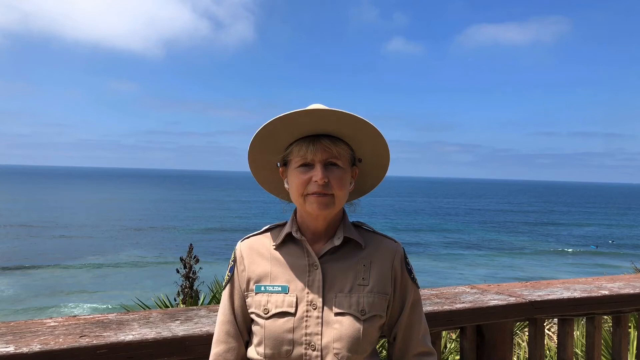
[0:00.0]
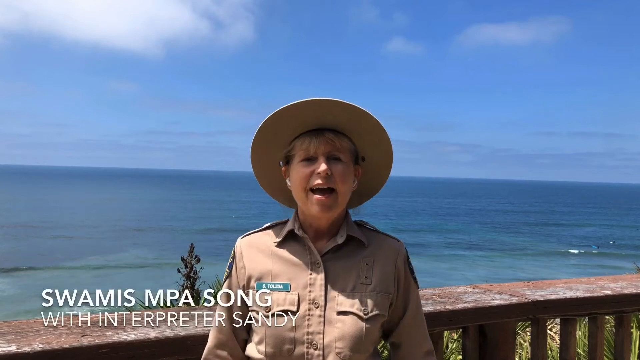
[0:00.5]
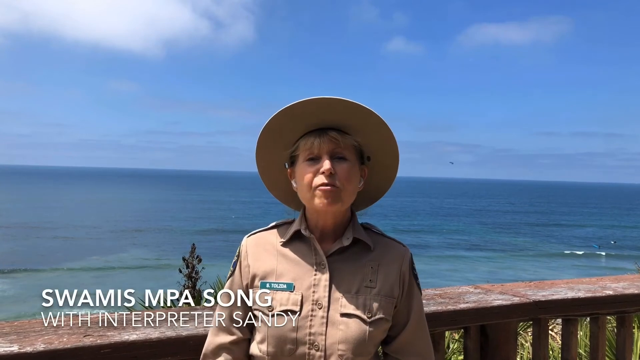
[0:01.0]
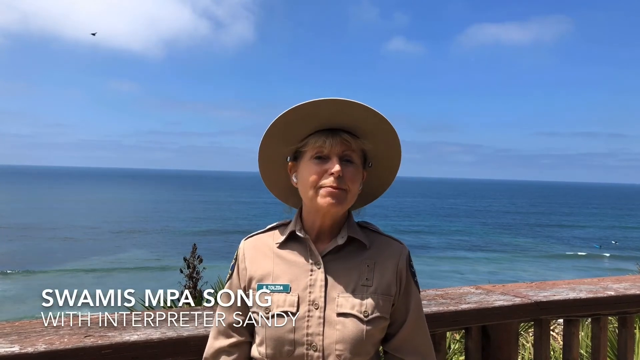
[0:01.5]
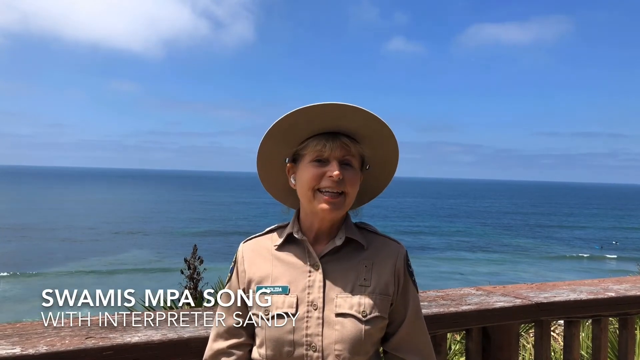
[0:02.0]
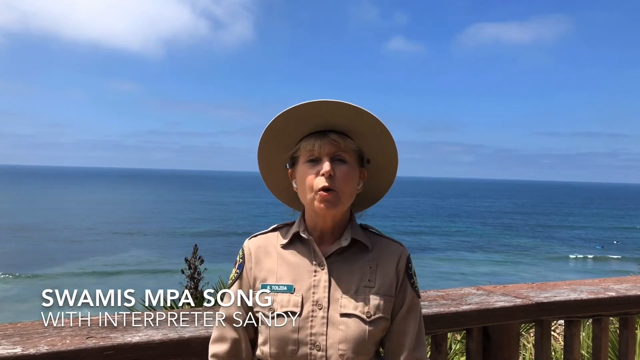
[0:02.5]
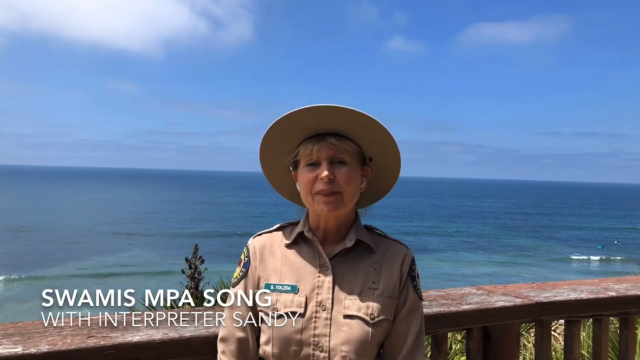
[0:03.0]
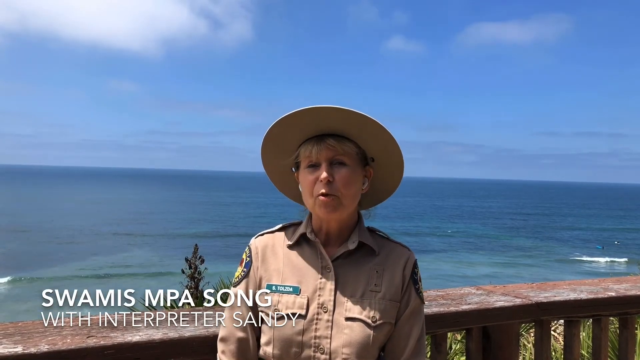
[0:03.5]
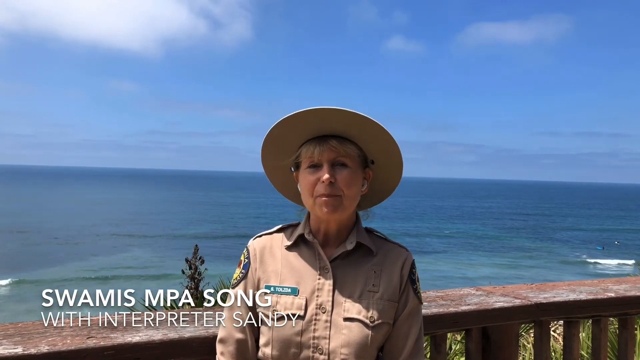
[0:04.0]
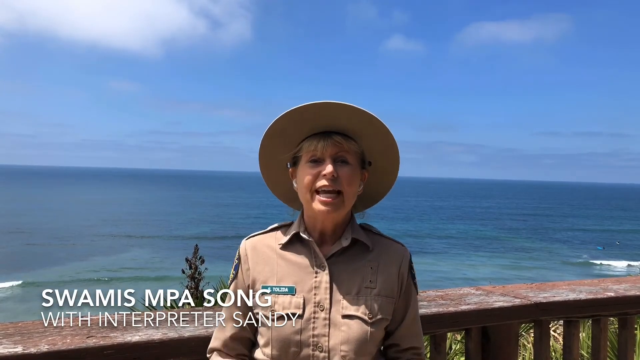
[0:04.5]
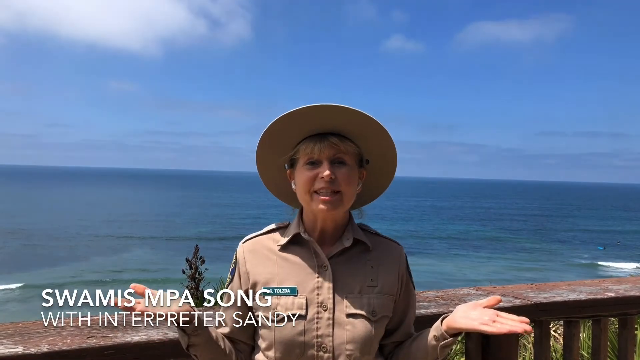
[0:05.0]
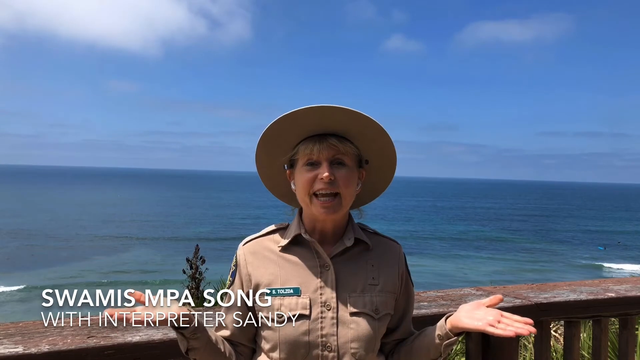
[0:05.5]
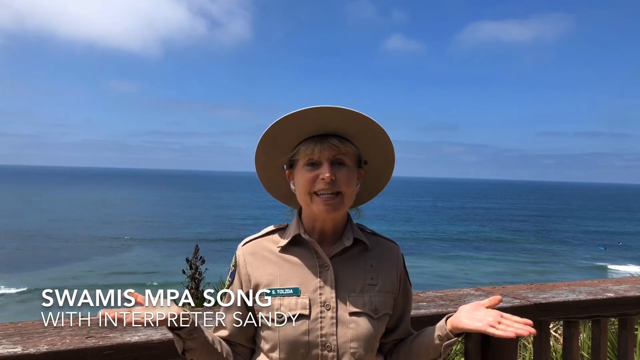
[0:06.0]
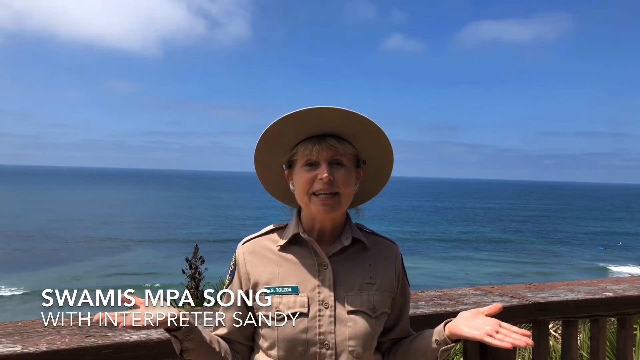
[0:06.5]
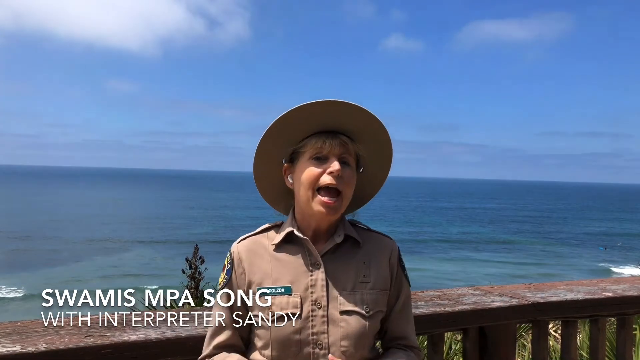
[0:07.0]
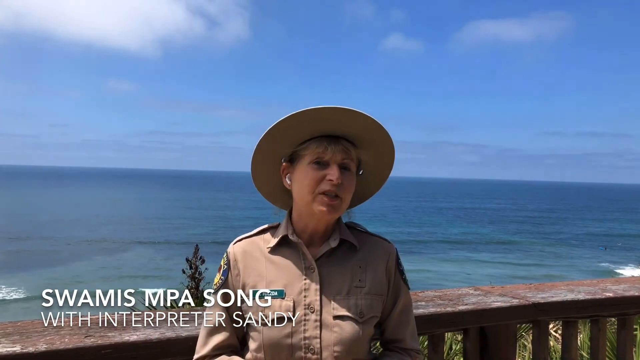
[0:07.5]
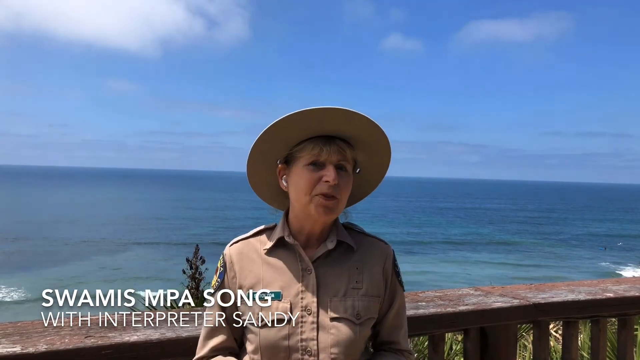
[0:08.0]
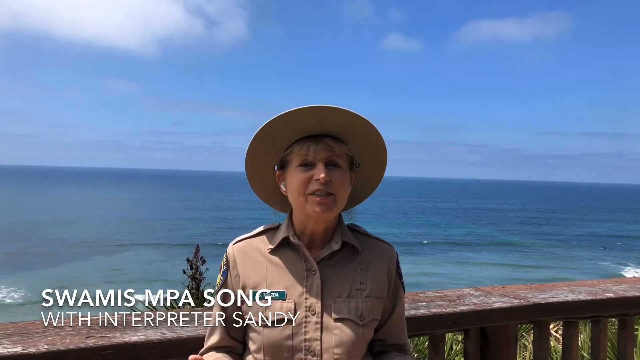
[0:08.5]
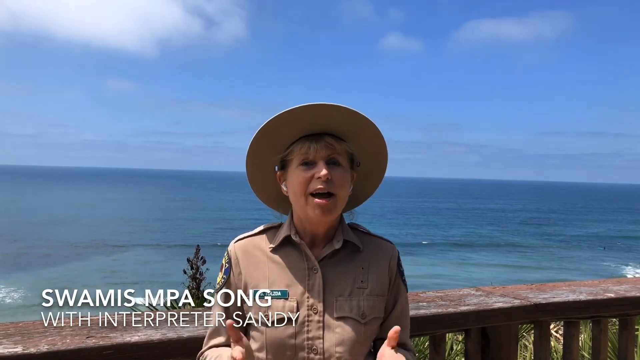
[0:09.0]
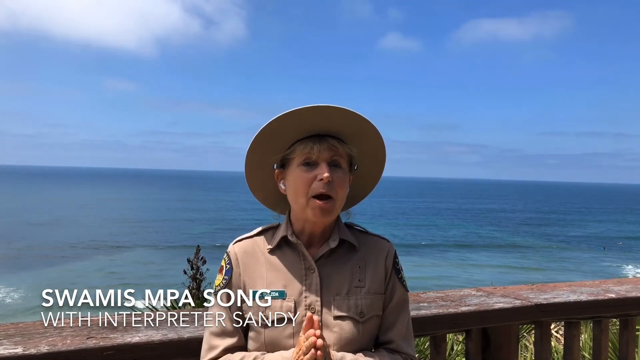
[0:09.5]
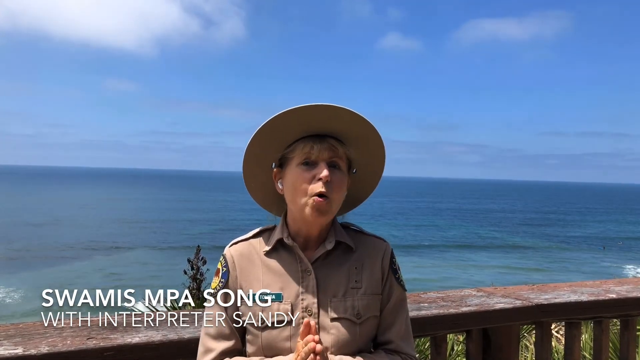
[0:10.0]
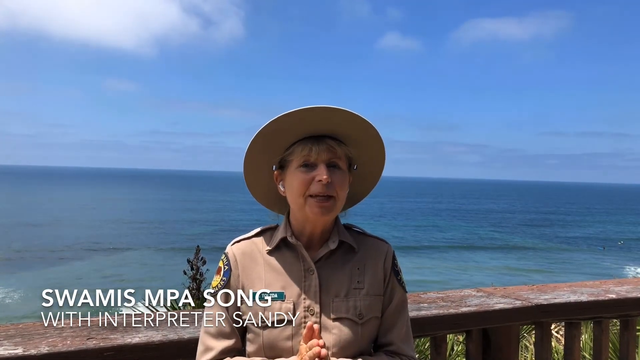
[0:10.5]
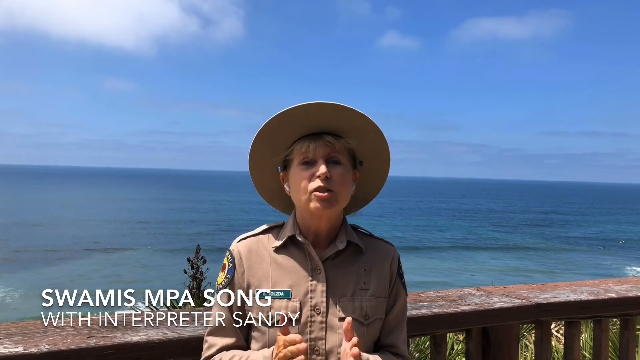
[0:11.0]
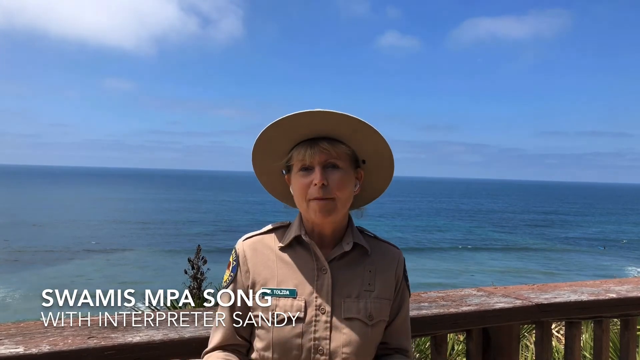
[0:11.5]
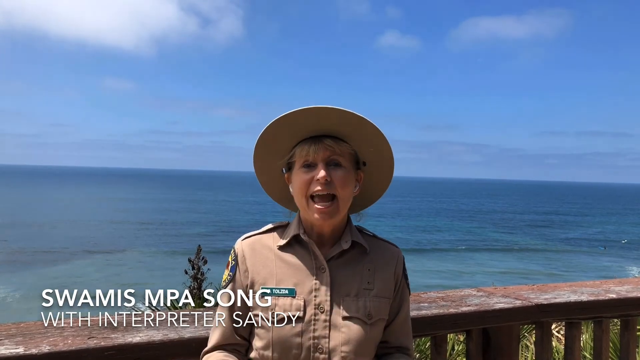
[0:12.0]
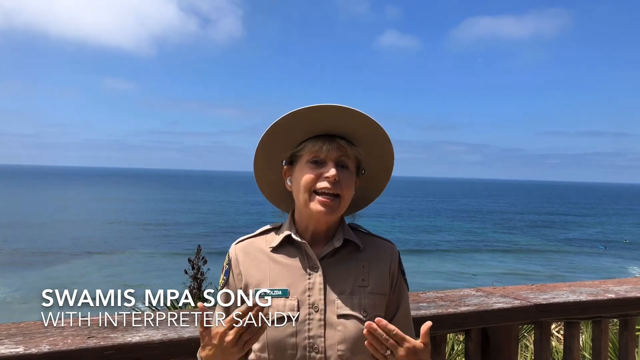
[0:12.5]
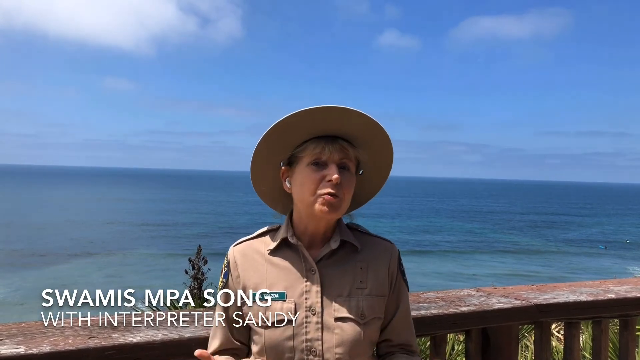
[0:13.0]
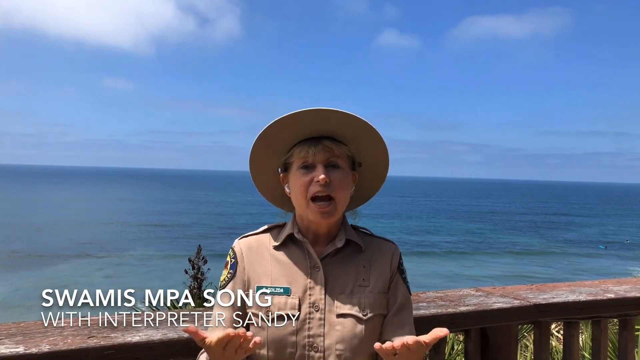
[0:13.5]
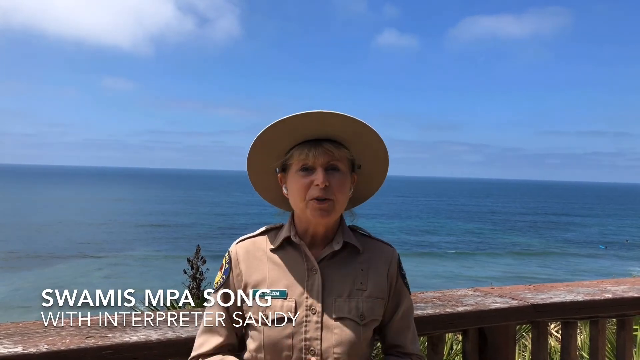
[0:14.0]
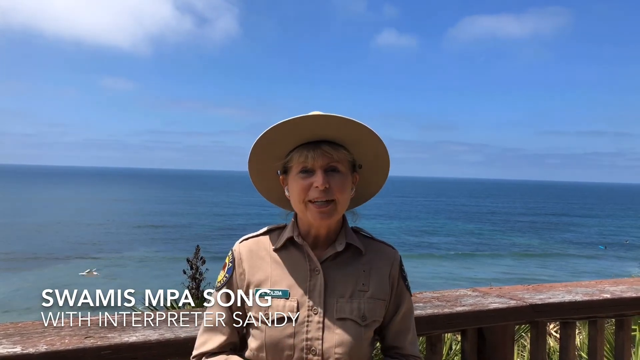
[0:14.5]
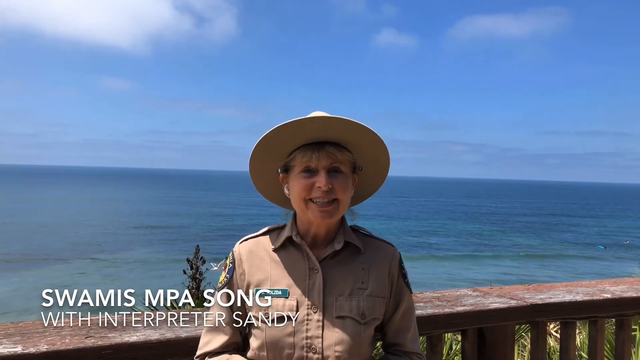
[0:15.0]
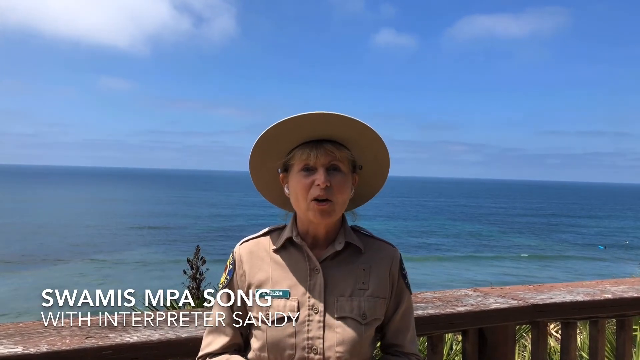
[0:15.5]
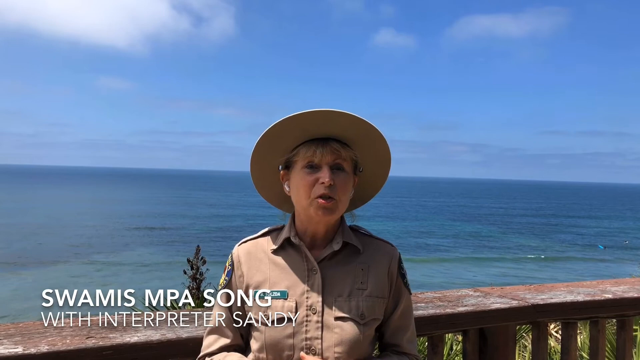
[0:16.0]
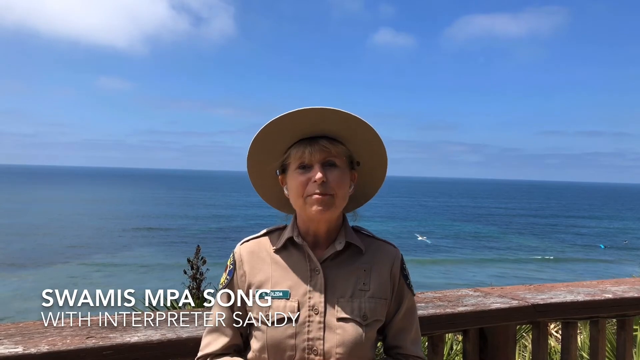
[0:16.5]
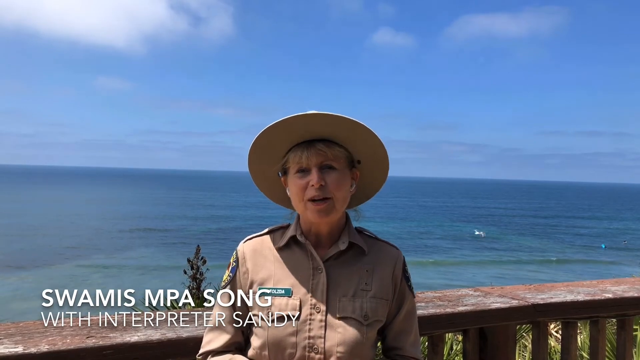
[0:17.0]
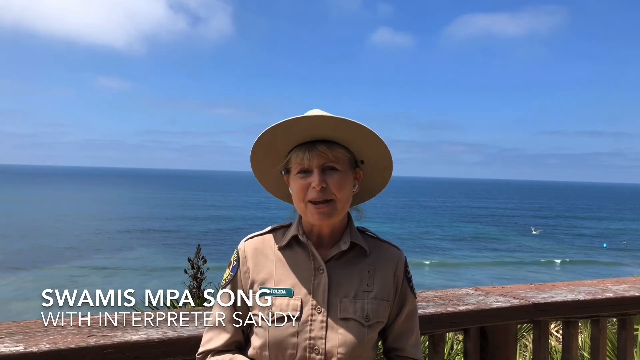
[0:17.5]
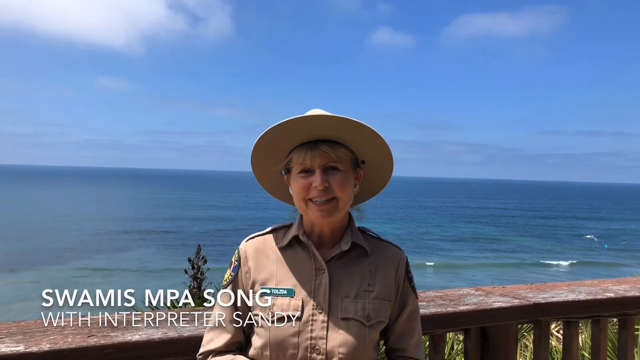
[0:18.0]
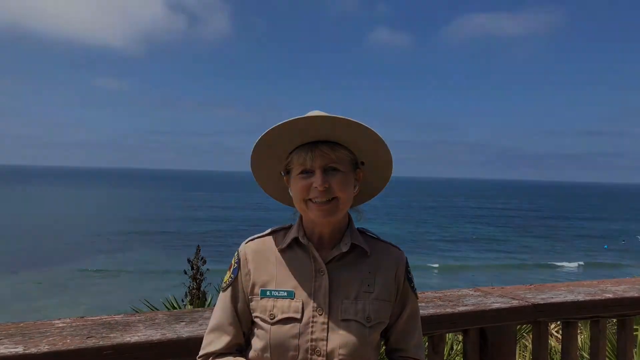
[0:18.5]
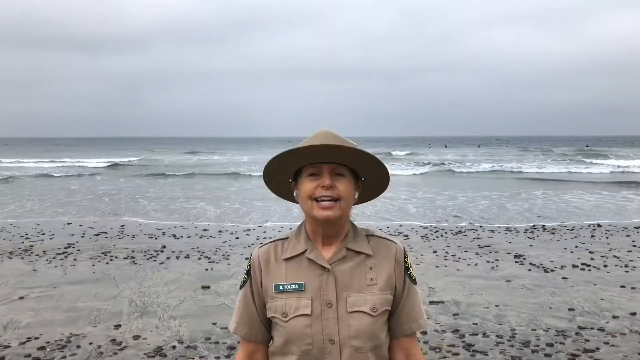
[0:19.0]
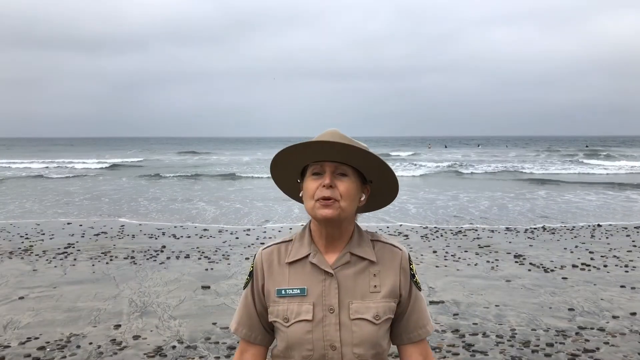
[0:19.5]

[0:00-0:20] A woman stands in front of a big blue ocean, wearing a brown uniform with a grey hat and a grey shirt with a name tag on her chest. She is explaining something to the camera, and the words "Swami's MPA song with interpreter Sandy" appear on the screen. Behind her are the waves in the water, the blue sky, and the line where the sea meets the sky. She seems to be middle-aged and seems very confident about what she is saying. The video cuts to a scene where she is standing on a beach, with waves coming in, seagulls flying behind her and the ocean roaring. Based on the on-screen text, the woman is apparently named Sandy.